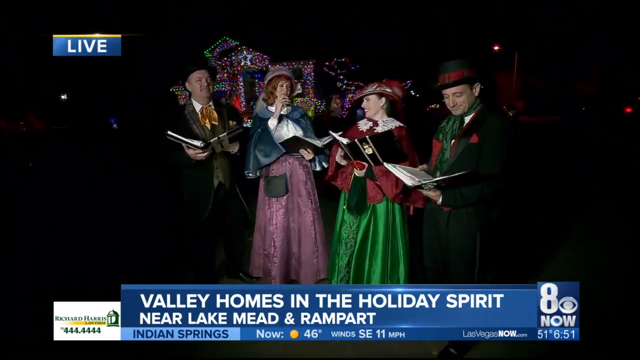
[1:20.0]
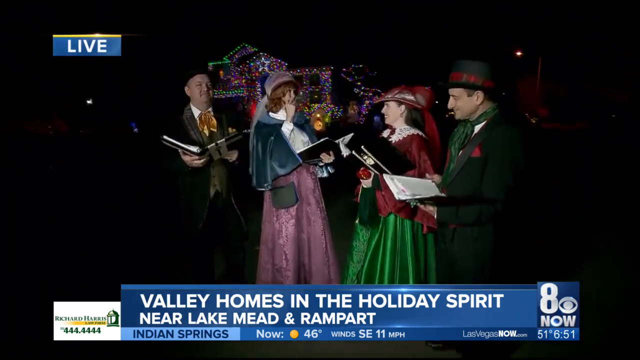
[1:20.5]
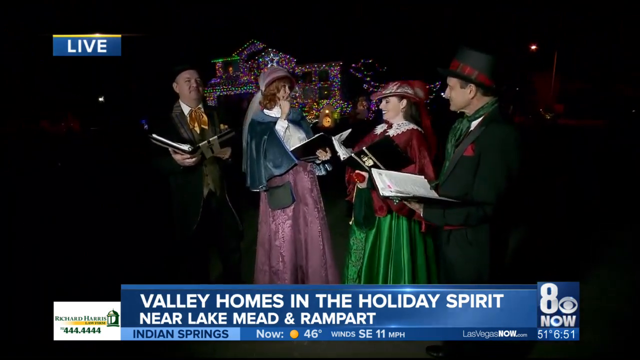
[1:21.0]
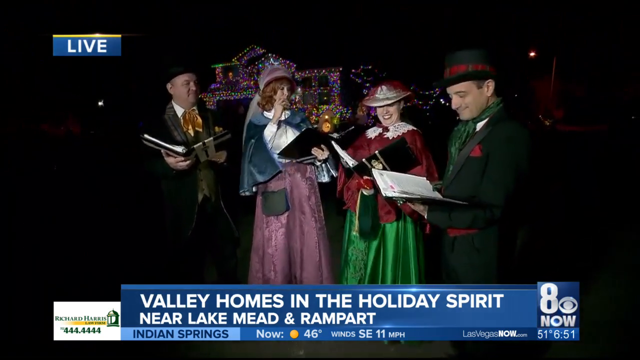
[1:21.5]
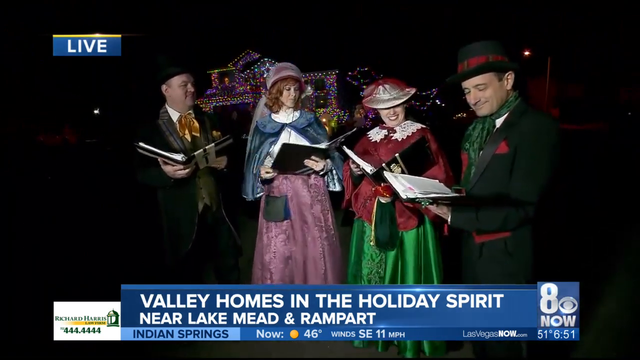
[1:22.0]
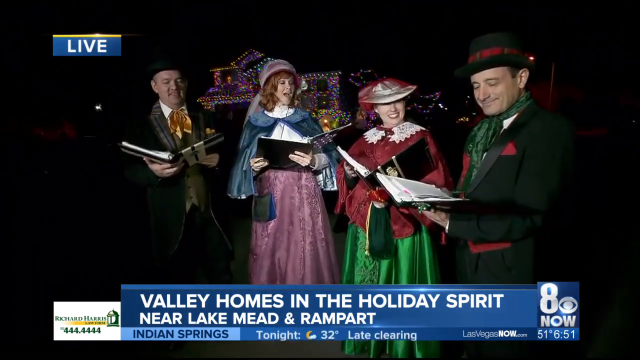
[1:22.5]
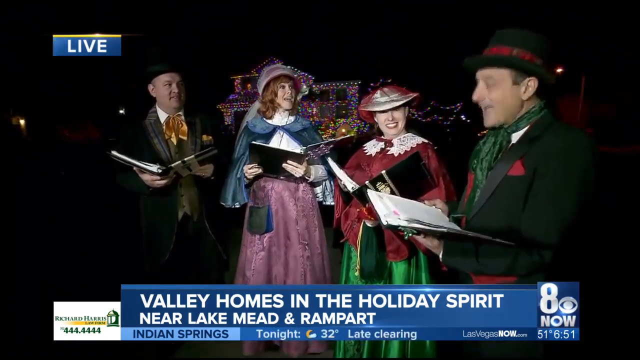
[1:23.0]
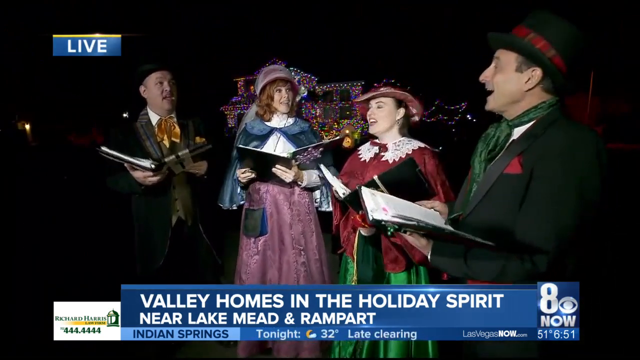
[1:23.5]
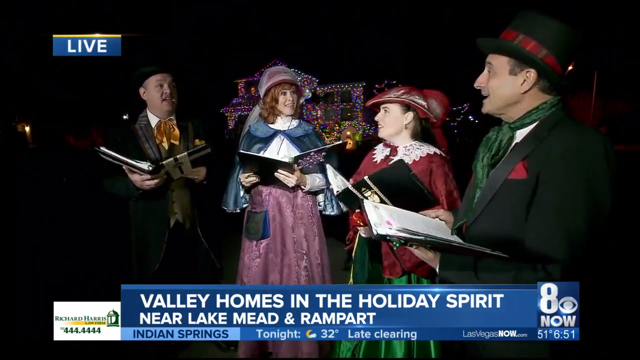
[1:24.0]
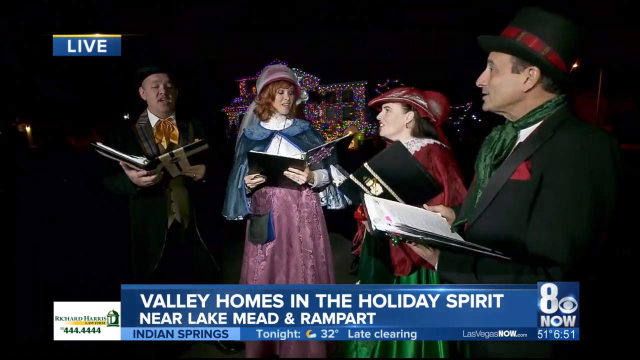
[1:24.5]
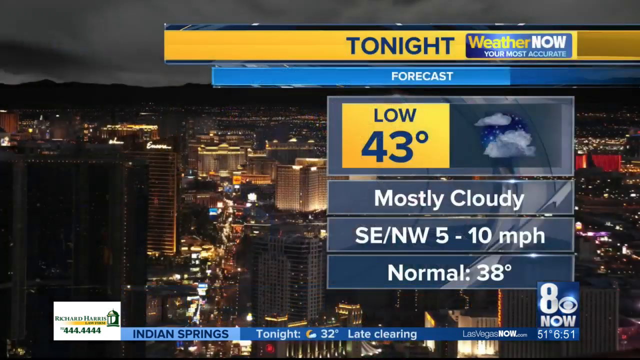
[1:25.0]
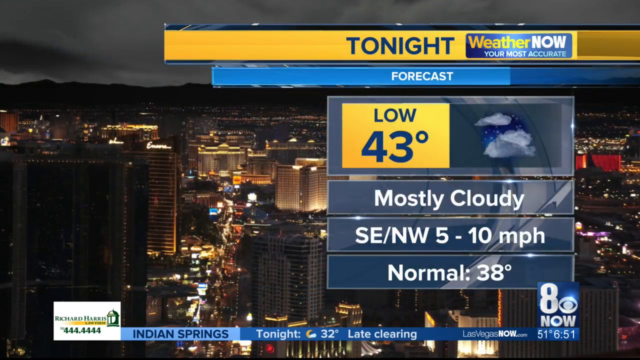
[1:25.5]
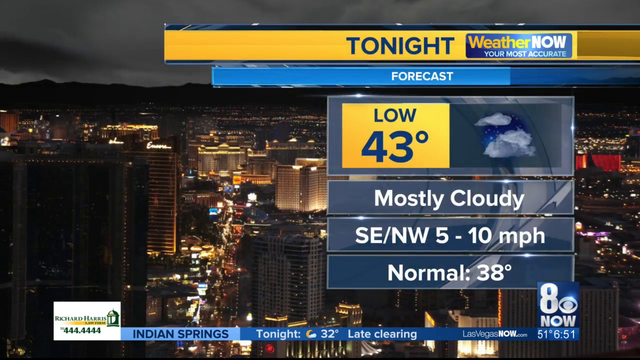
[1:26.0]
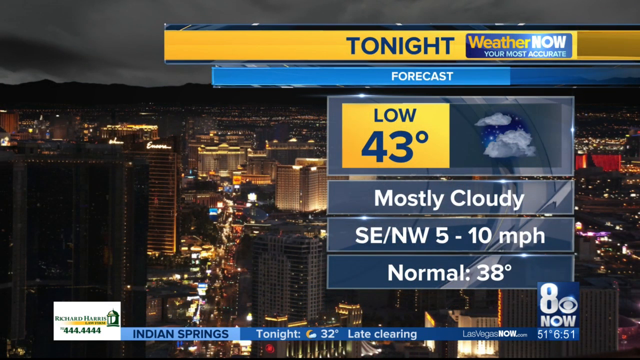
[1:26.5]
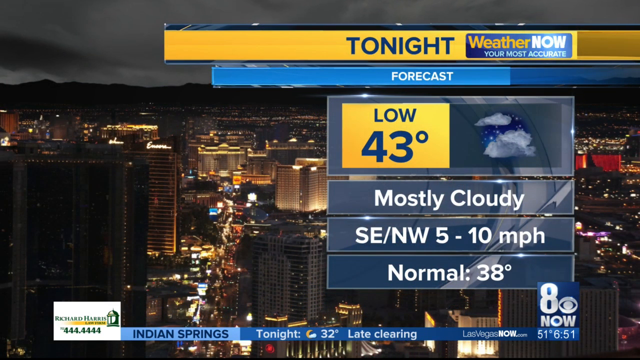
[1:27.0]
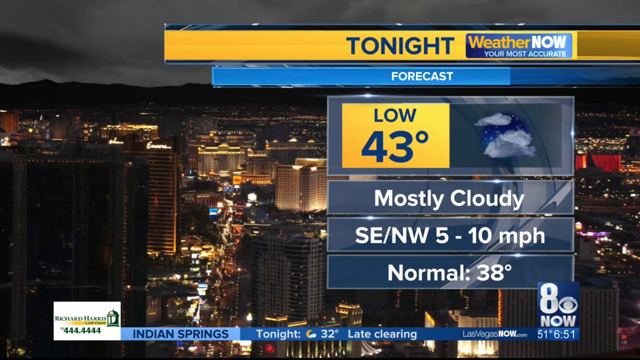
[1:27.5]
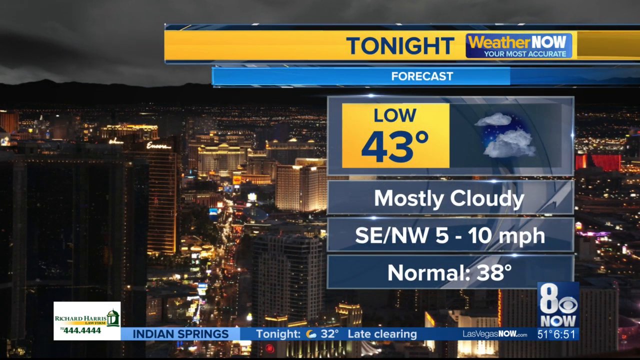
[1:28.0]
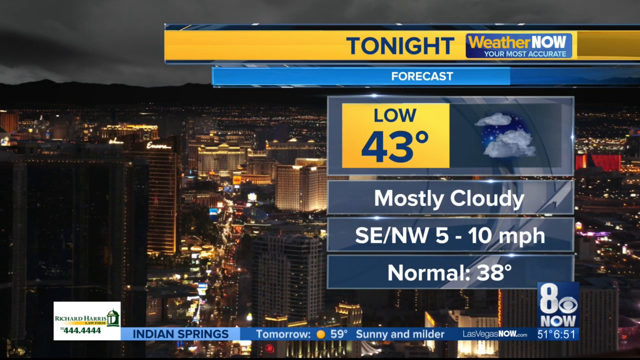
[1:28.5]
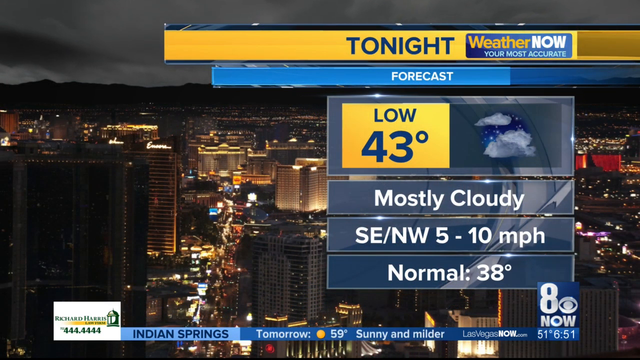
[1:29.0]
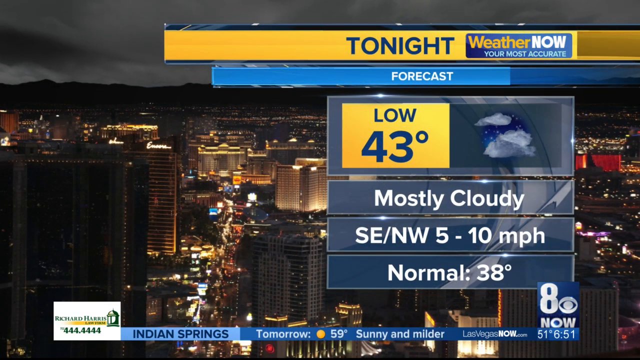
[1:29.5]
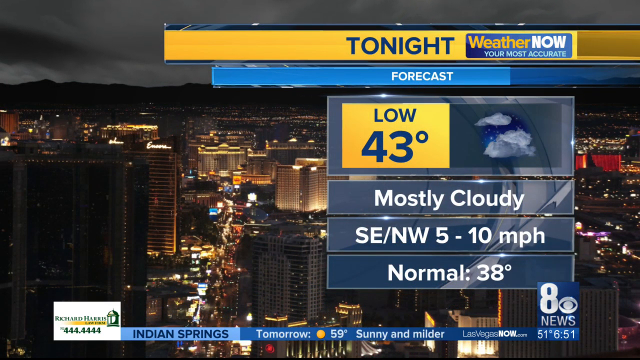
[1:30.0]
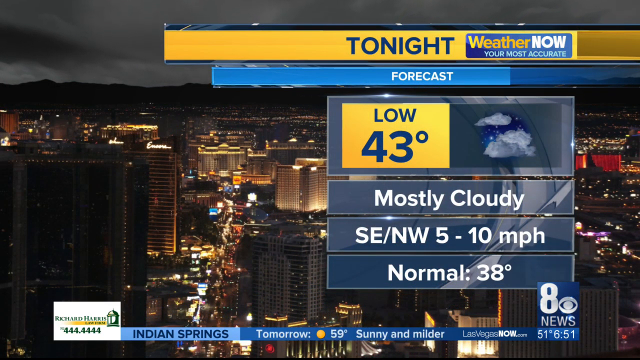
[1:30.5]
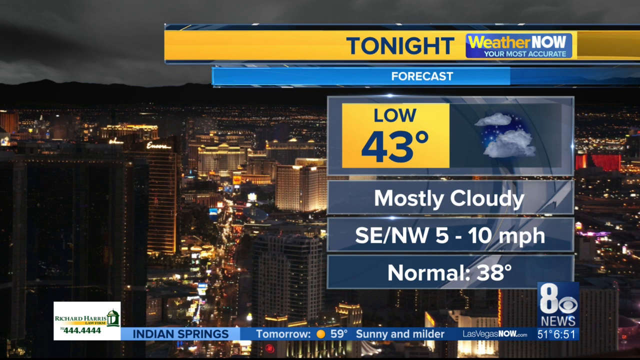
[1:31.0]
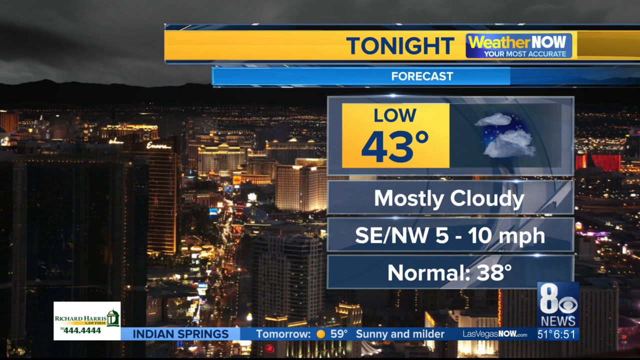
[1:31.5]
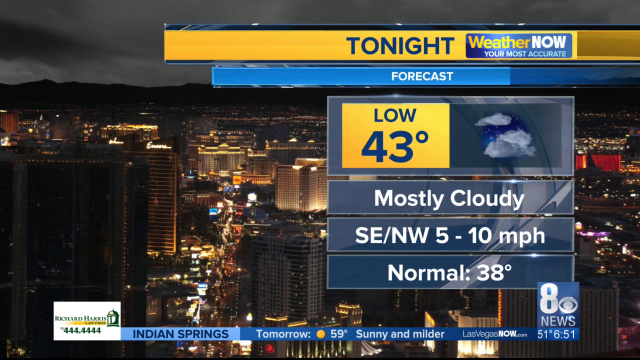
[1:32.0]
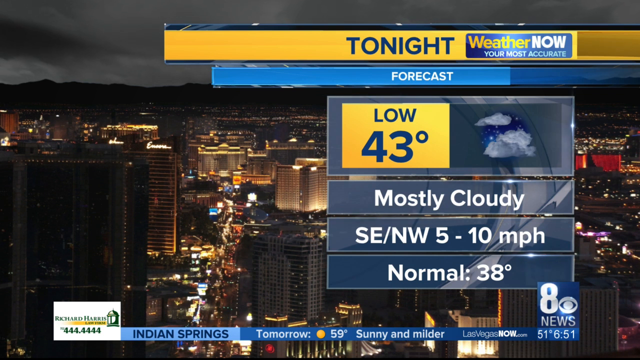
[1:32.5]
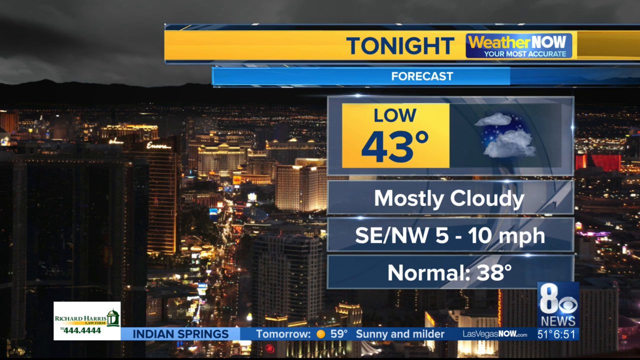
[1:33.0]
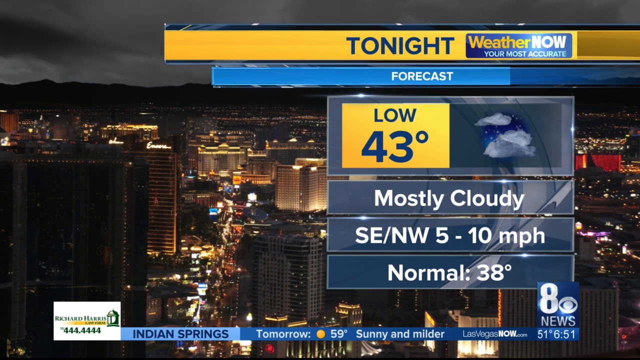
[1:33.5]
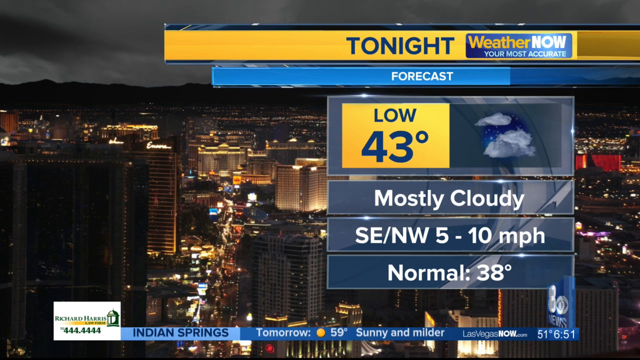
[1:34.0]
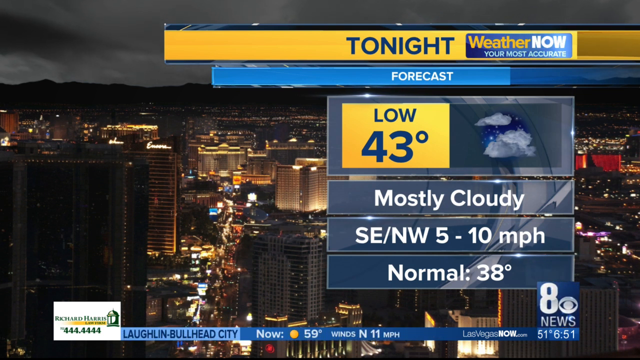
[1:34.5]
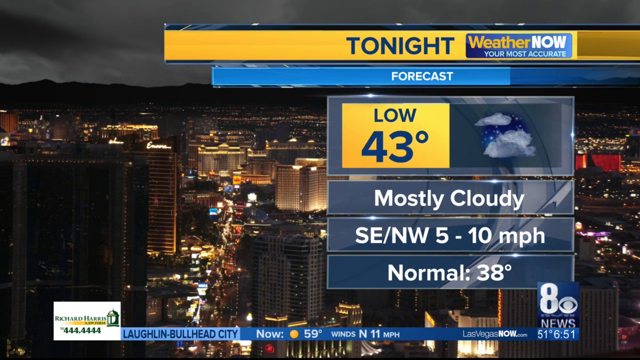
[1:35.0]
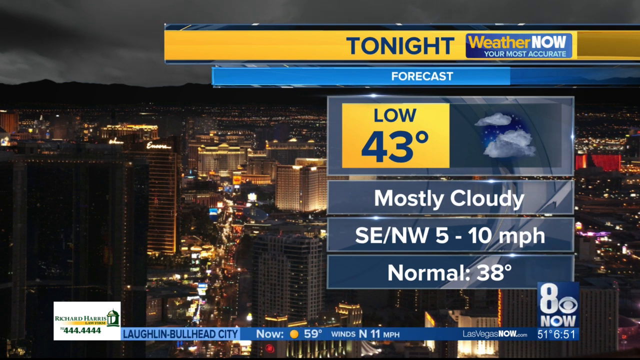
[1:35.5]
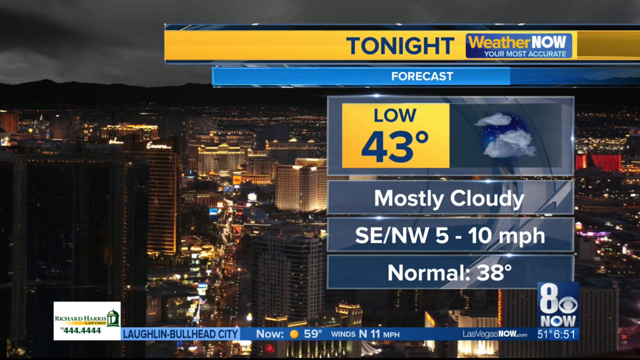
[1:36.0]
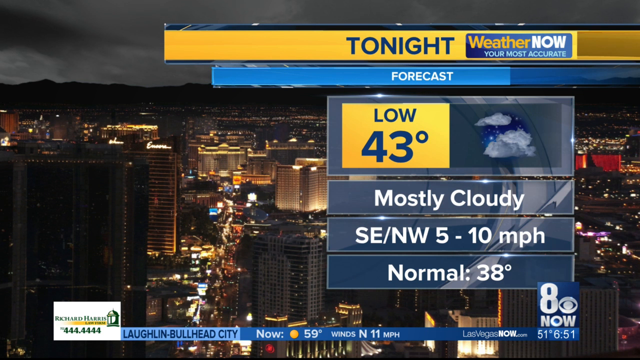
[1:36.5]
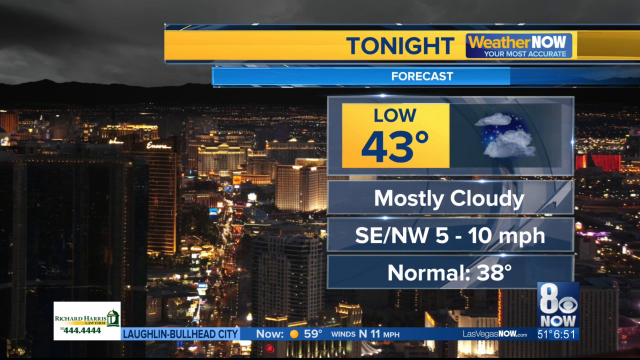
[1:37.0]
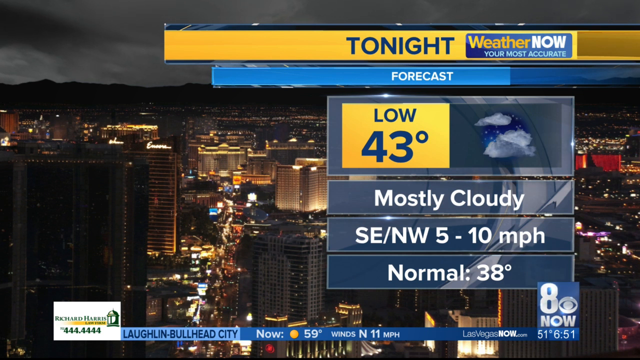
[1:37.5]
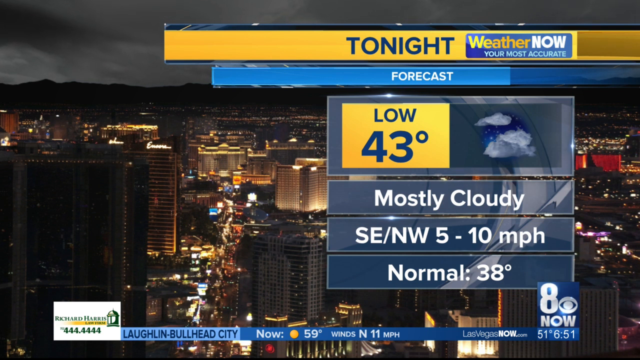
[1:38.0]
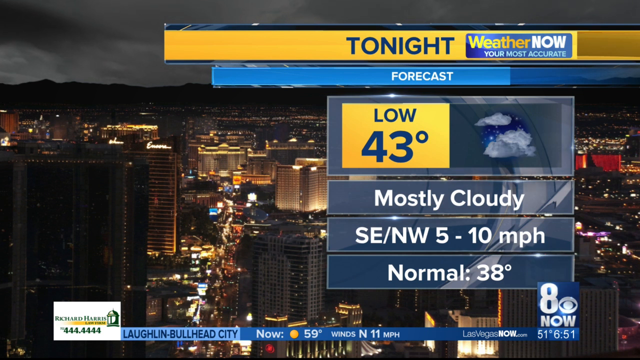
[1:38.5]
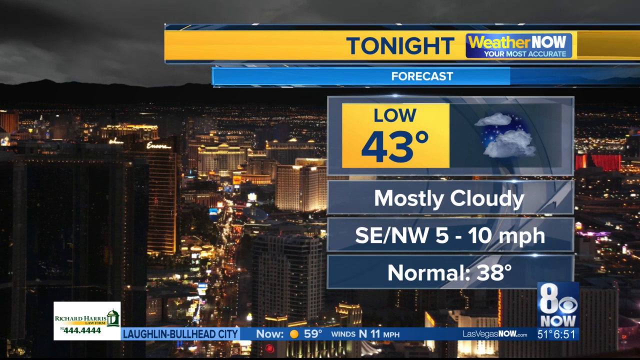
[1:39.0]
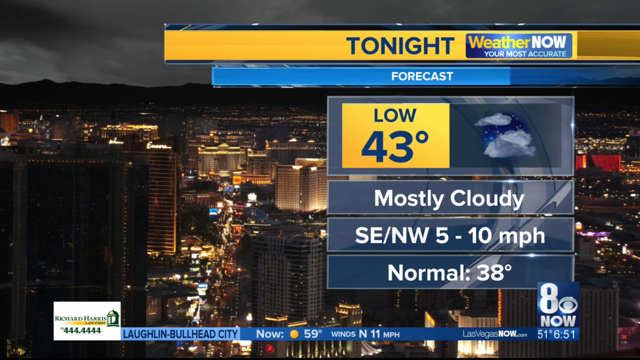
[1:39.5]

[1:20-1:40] The carol singers all seem to look to the man on the right for a cue to start singing. Holding their books, they jostle around a little to get into the best position. Eventually the man at the right end of the group nods towards them and they all start singing together. The shot then fades to a weather graphic whose background is a still photograph of a city skyline at night. A gold strap across the top of the screen starts at the right and comes almost three quarters of the way across. On it, blue text says "tonight", next to a logo that says "weather now your most accurate". Below is a blue strap with the word "forecast" in white. Beneath that, boxes contain the forecast: the first says "low 43 degrees"; next to it is a picture of clouds with what looks like rain between them, though it is hard to see in the low resolution. Below that it says "mostly cloudy", then "SE/NW 5 to 10 miles per hour", then "normal 38 degrees". Across the bottom of the screen the Eight Now logo is still visible, along with a ticker showing more weather details.